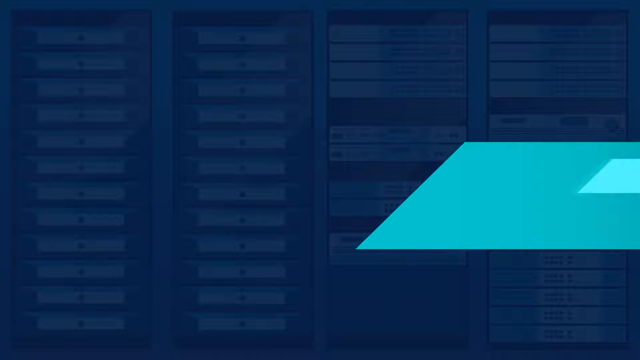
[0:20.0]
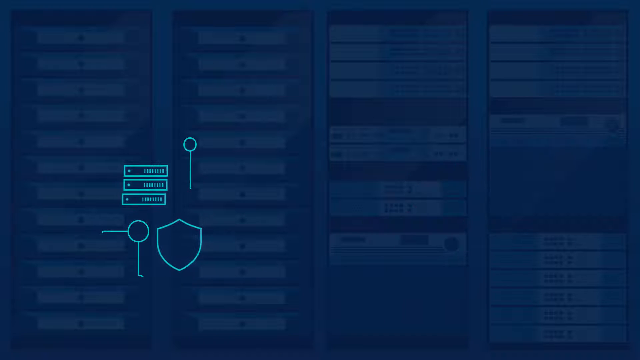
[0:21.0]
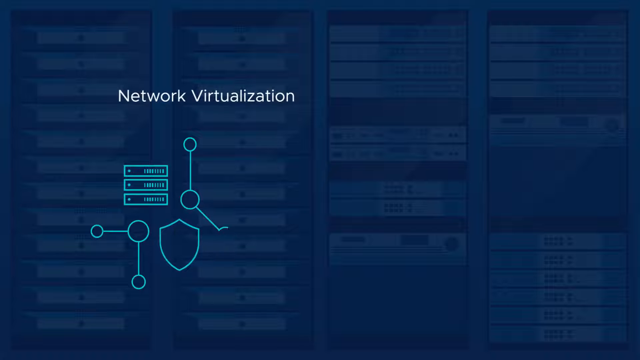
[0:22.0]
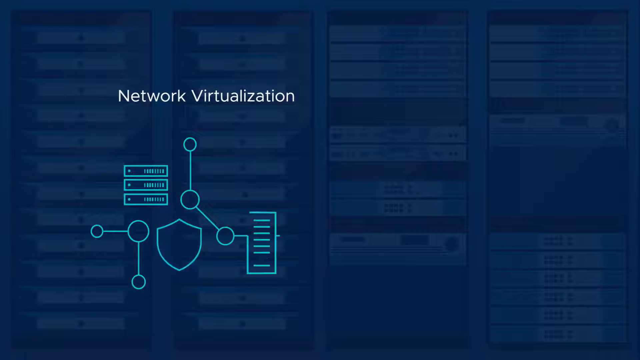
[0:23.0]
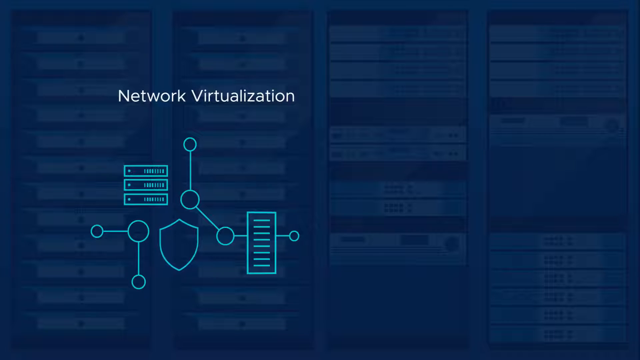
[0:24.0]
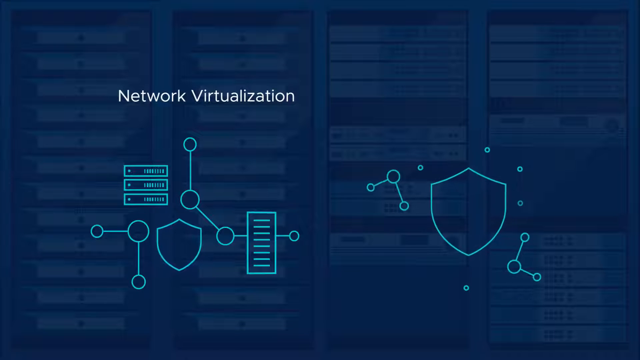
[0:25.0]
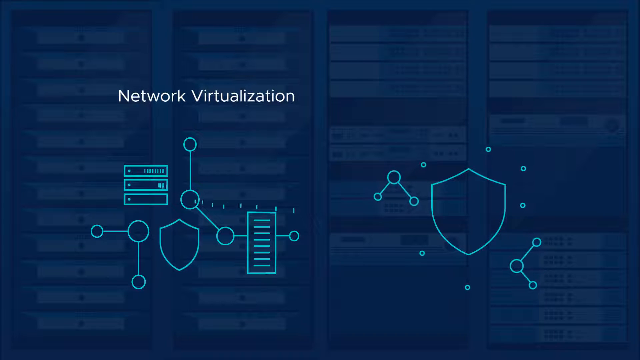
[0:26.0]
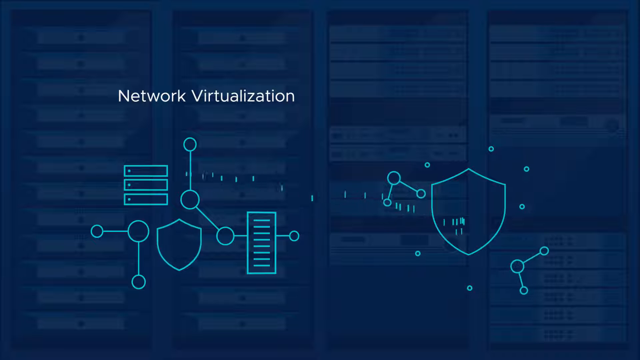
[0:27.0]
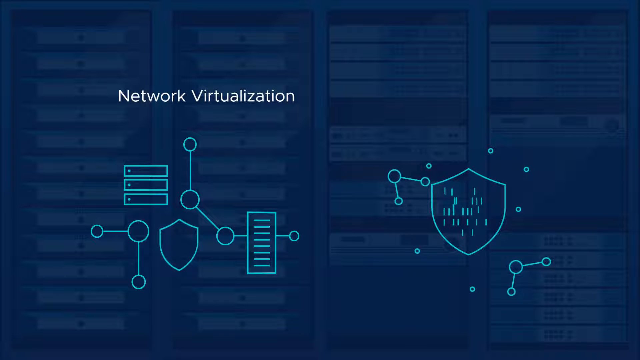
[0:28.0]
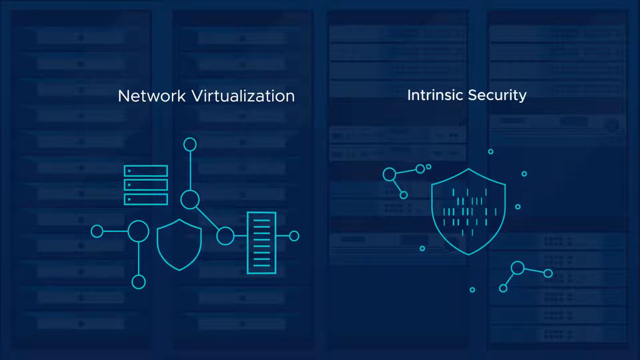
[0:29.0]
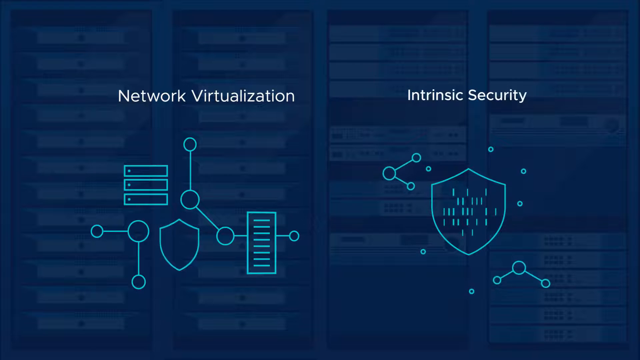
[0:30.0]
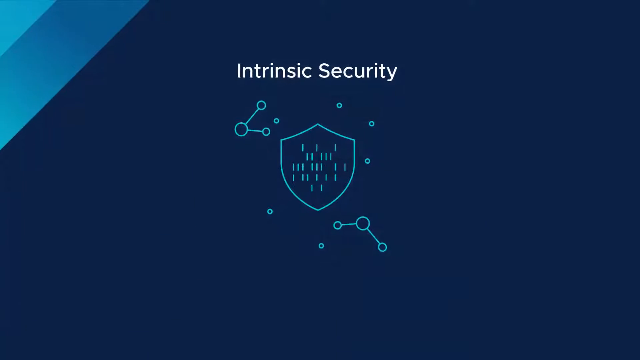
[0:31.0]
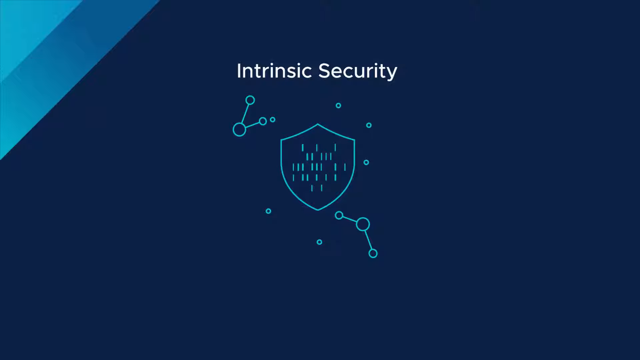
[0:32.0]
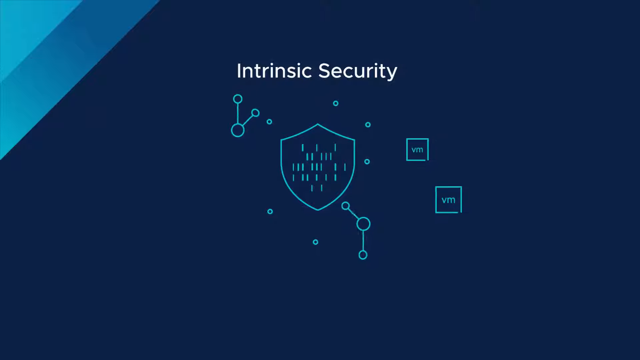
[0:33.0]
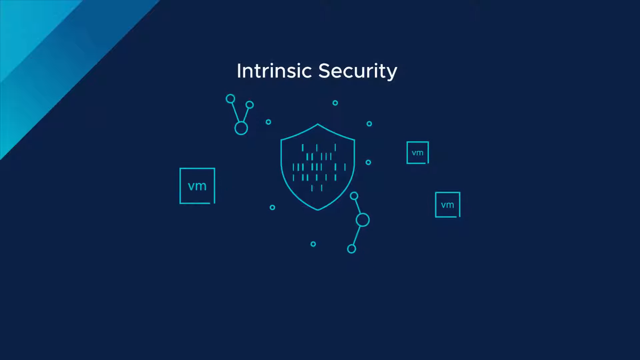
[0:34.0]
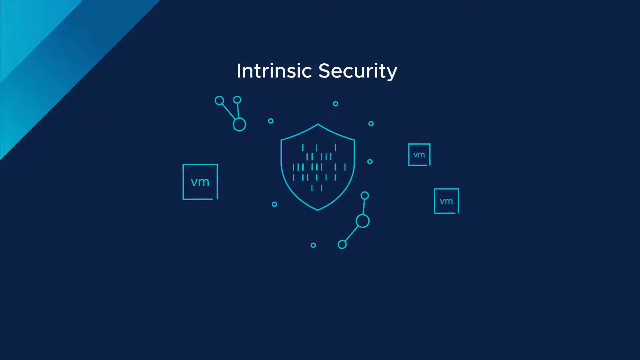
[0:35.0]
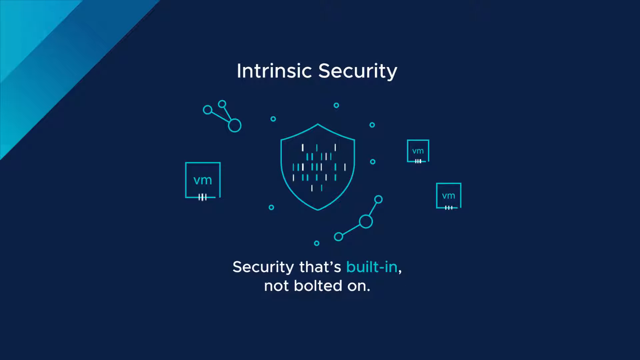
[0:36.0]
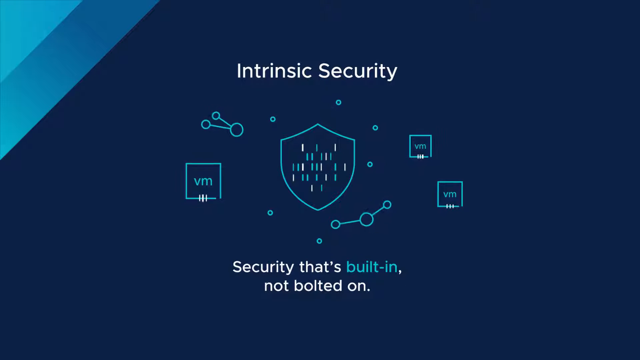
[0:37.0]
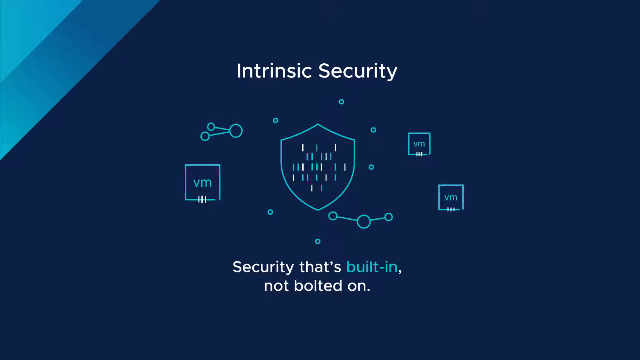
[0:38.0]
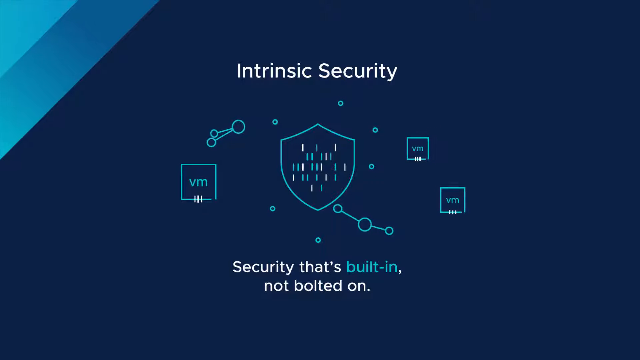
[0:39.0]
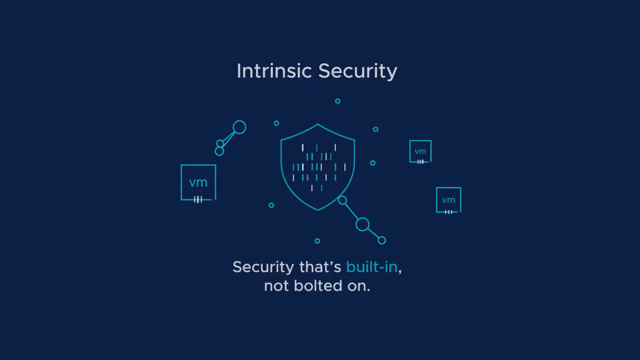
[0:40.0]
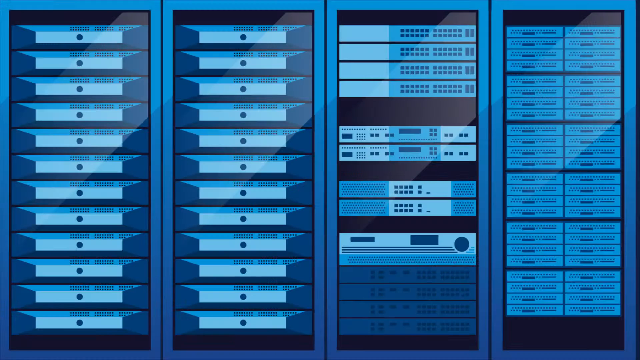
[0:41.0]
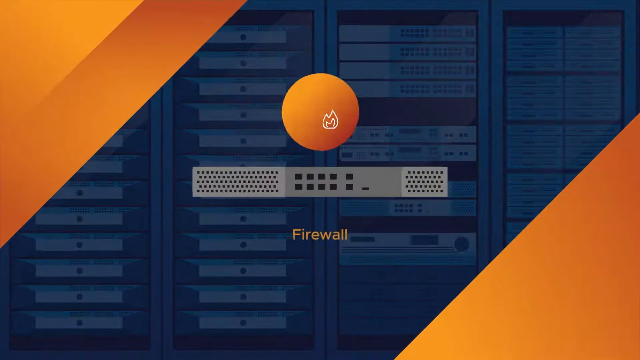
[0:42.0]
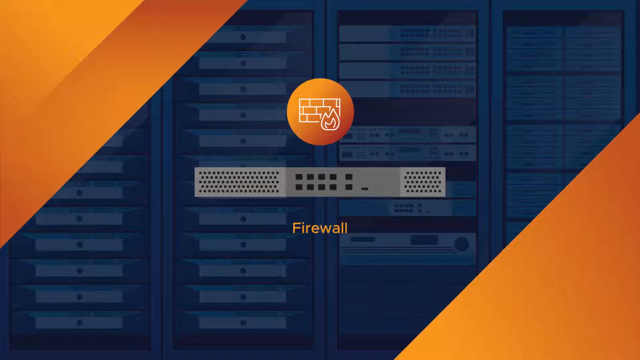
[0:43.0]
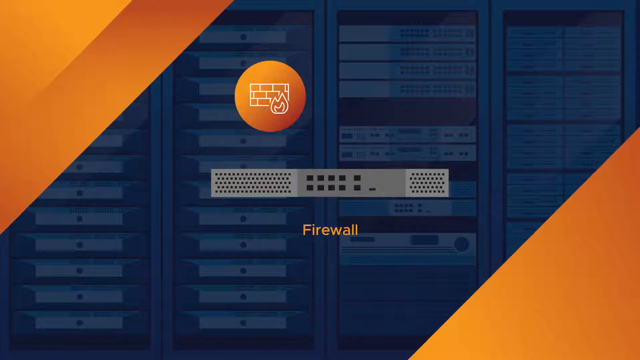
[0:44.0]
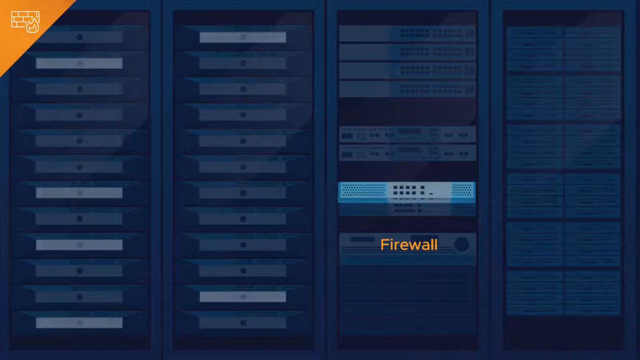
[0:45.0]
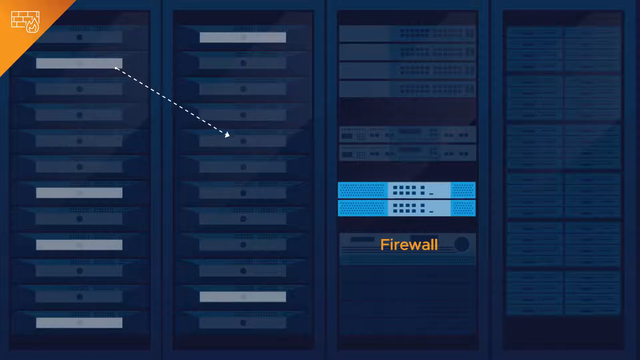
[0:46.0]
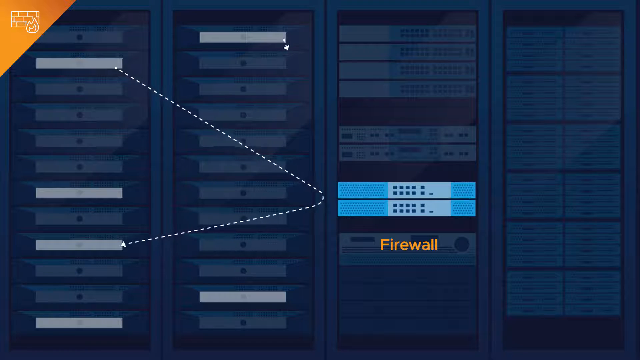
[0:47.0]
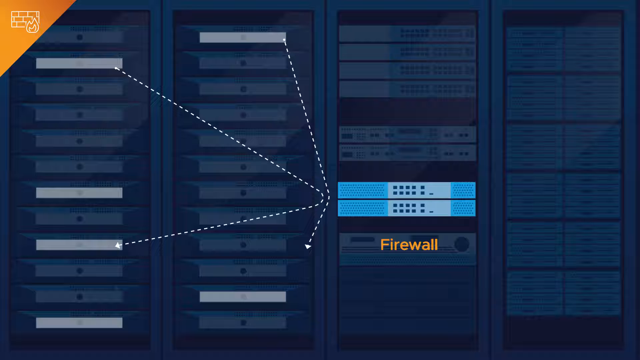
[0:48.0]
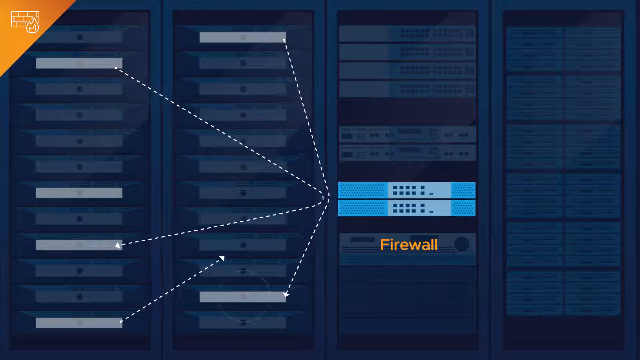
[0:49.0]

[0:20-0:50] Server racks are in the background: the first two rows have been replaced while the other two rows are still the older ones, under a darker blue background. White text on the left side reads "network visualization". A small pop-up shows a server rack and some circles connected with lines, and in the bottom right there is something like a shield. It transforms, grows bigger, and connects to another server rack, seemingly transmitting data to another shield-like shape. Text then reads "intrinsic security", which becomes the main focus in the center; squares containing "VM" pop up, and text at the bottom reads "security that's built in, not bolted on". The scene cuts back to the server room, and bright orange appears in the bottom left and upper right, with an orange ball in the center and one of the server racks. Yellow-orange text underneath reads "firewall". The firewall system is then placed into the server rack, and things bounce off the firewall.